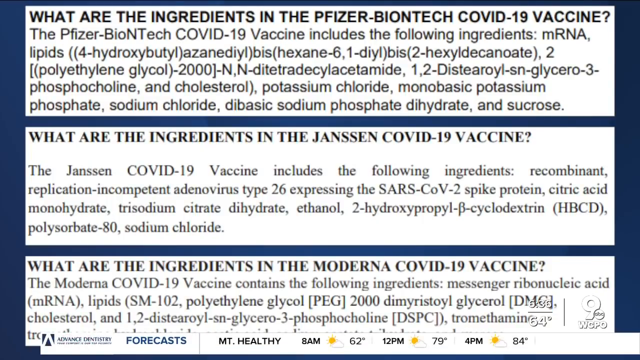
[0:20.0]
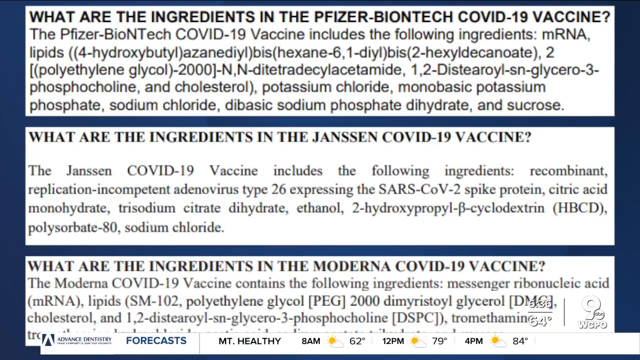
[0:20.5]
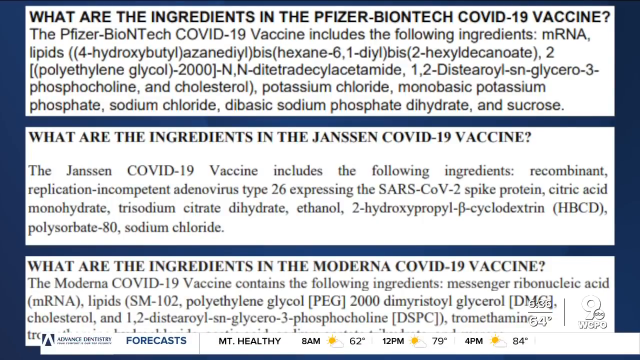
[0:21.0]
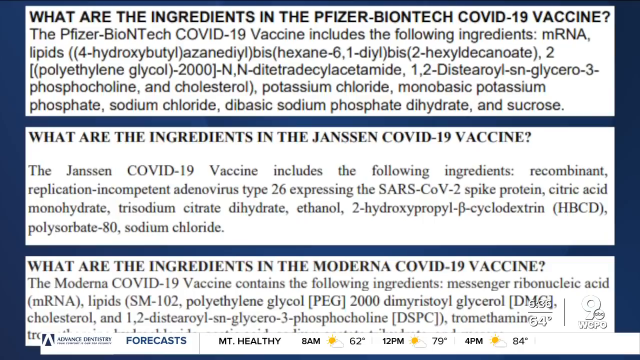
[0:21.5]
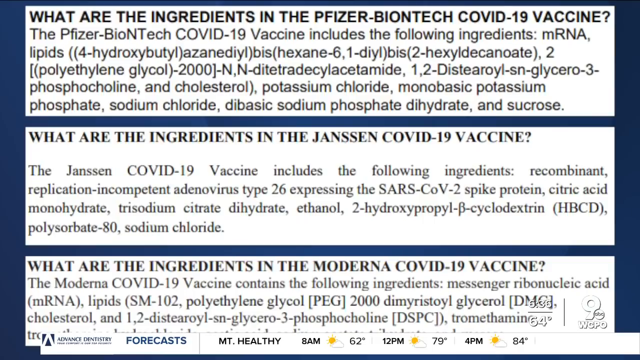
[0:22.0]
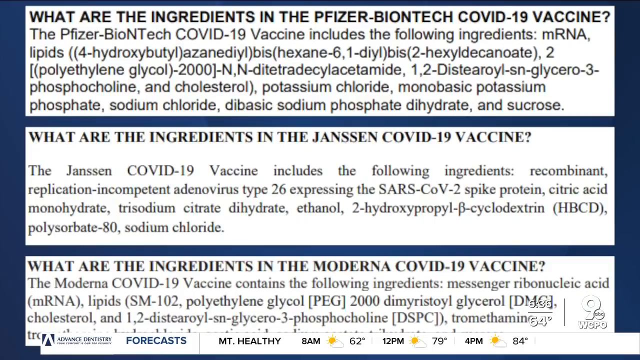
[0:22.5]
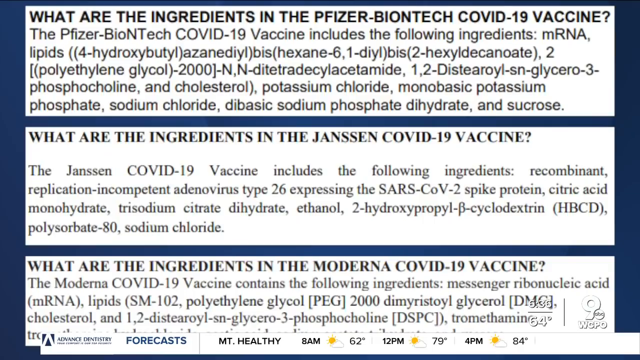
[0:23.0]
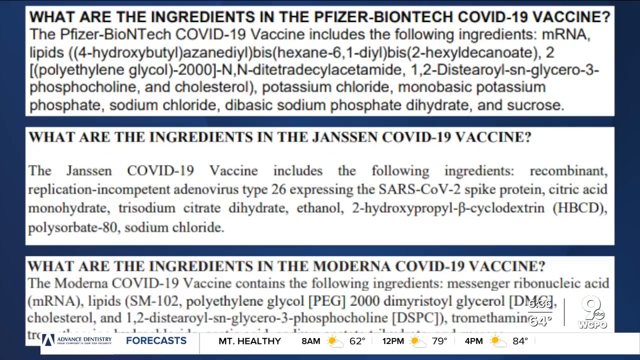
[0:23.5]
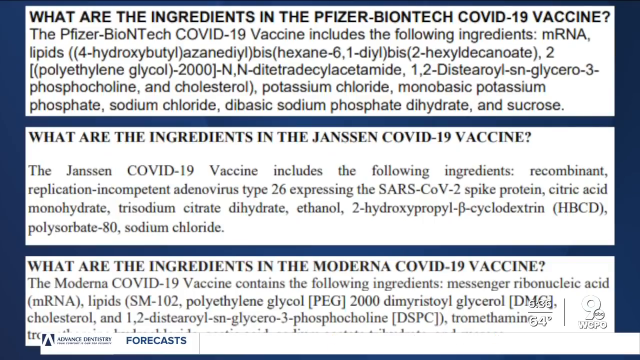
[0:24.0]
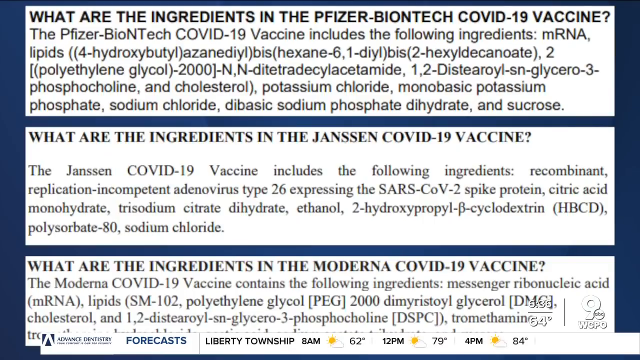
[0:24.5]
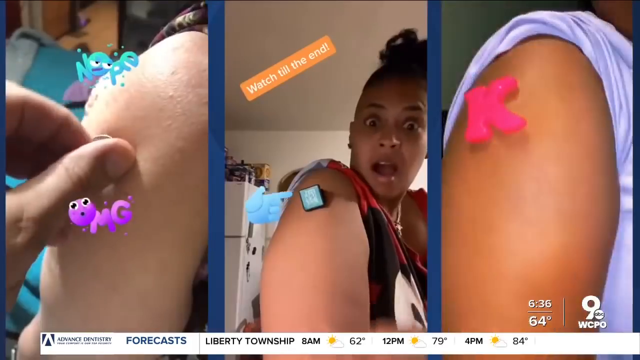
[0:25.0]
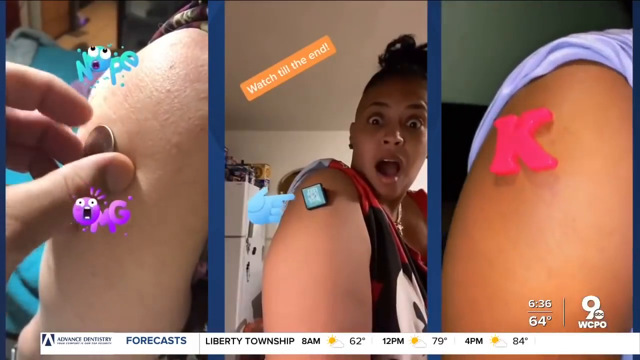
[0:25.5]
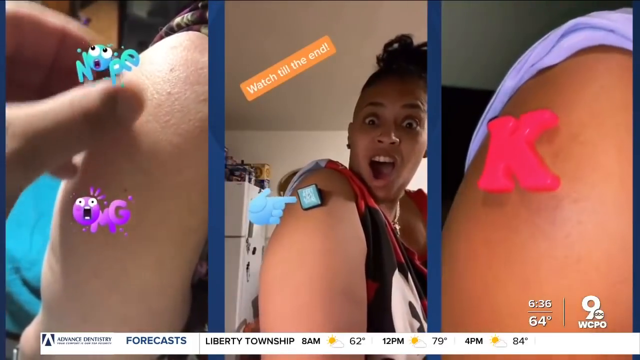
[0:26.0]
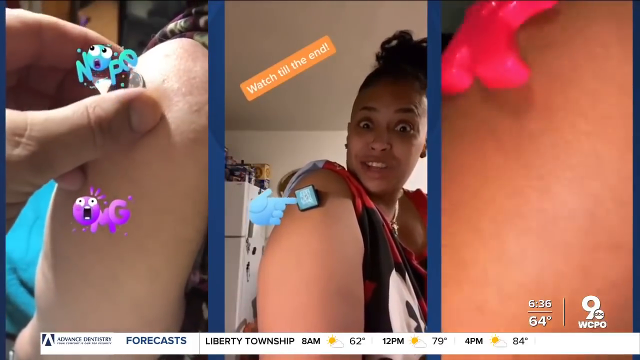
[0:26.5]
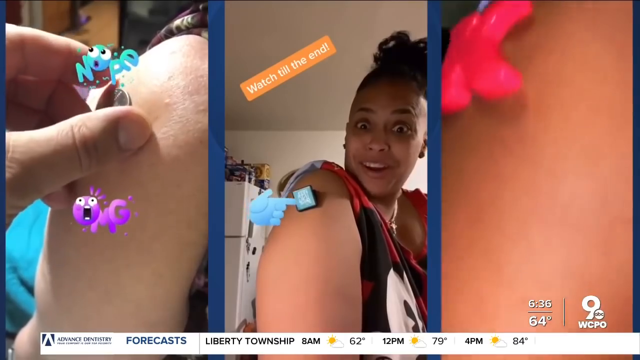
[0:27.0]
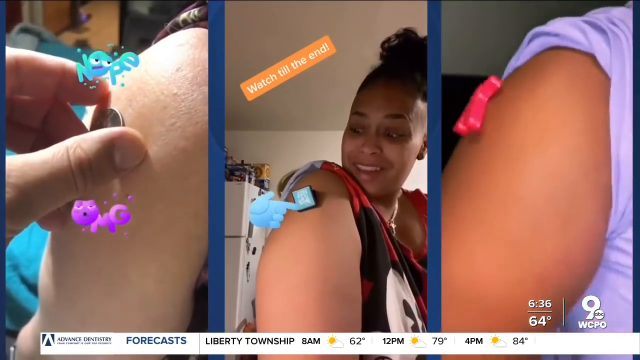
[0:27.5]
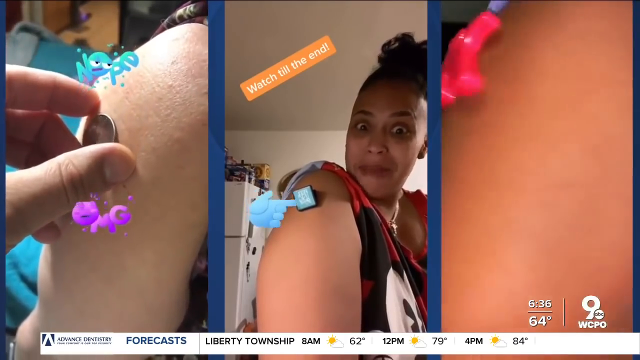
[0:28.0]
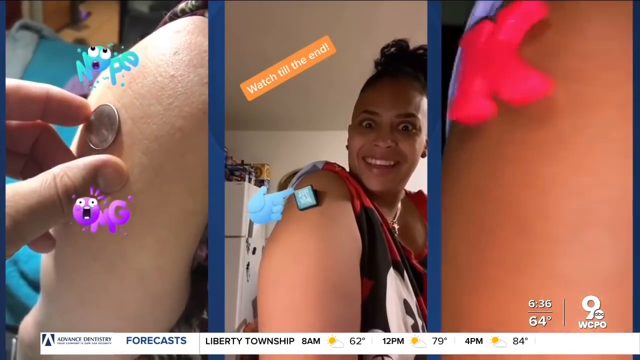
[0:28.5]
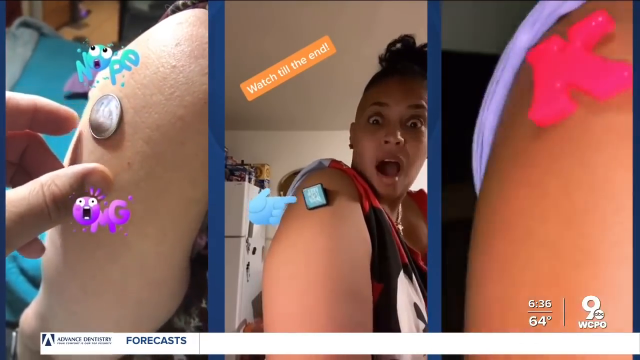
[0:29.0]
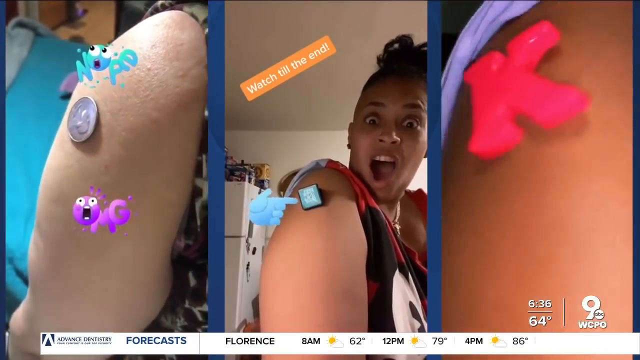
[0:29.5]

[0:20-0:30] An image shows the ingredients in the Janssen COVID-19 vaccine, followed by the Moderna vaccine, with all of the vaccine's listed ingredients shown below. Next, a woman appears to put a quarter on her arm, and it stays there; she then puts a refrigerator magnet on her arm, and it also stays, with a tag reading "watch till the end." The video then returns to the ingredients for the COVID-19 vaccine.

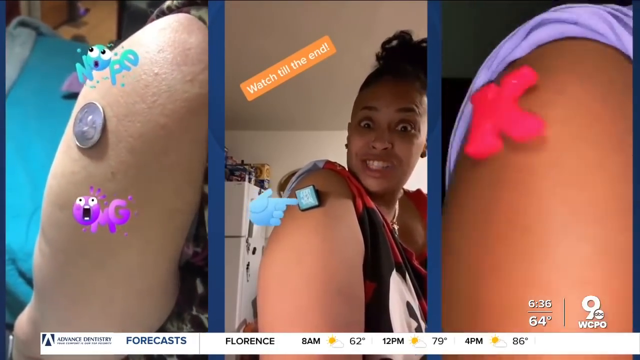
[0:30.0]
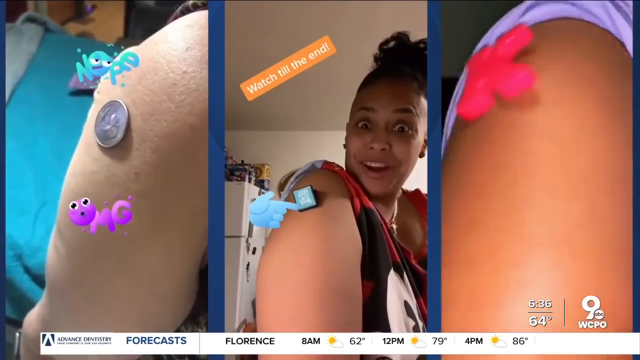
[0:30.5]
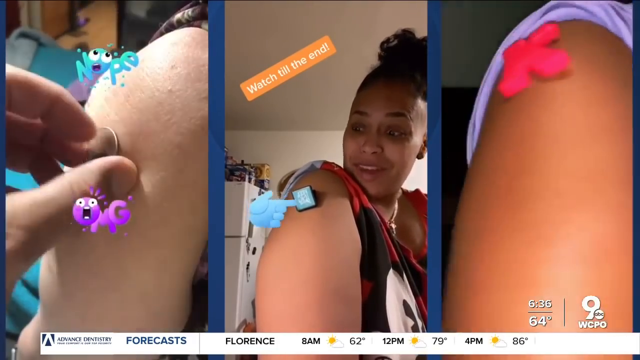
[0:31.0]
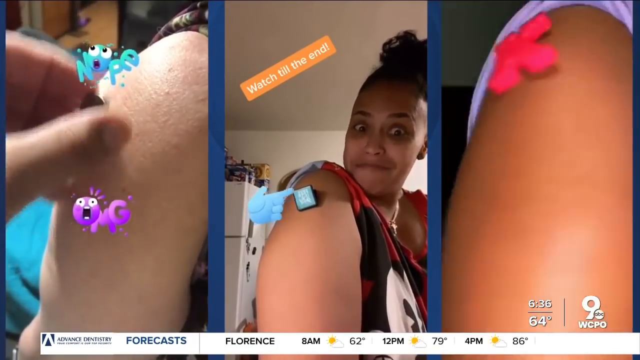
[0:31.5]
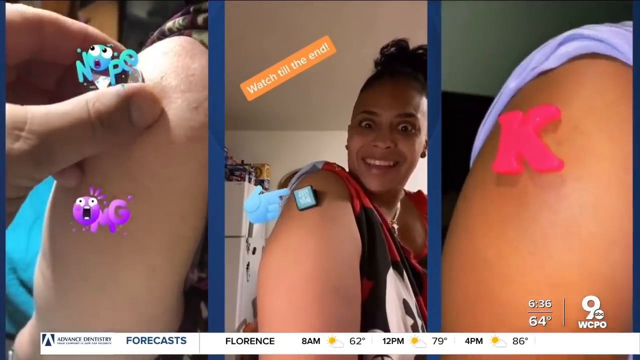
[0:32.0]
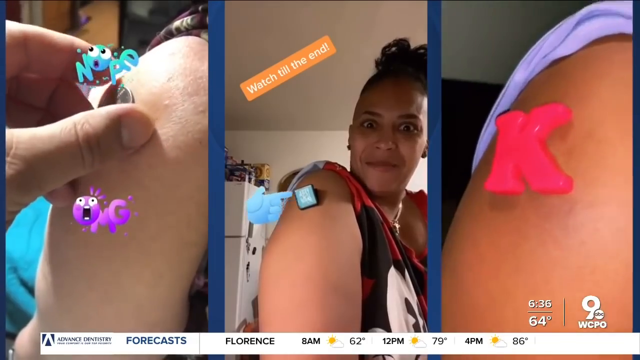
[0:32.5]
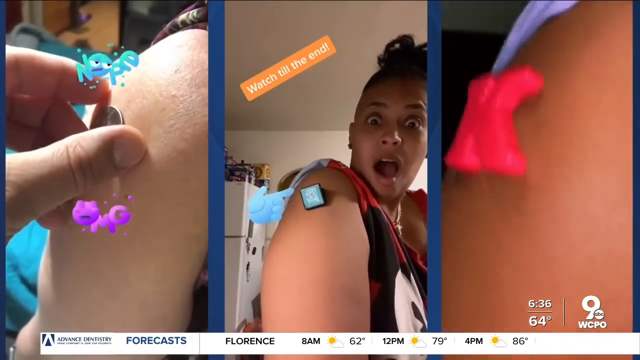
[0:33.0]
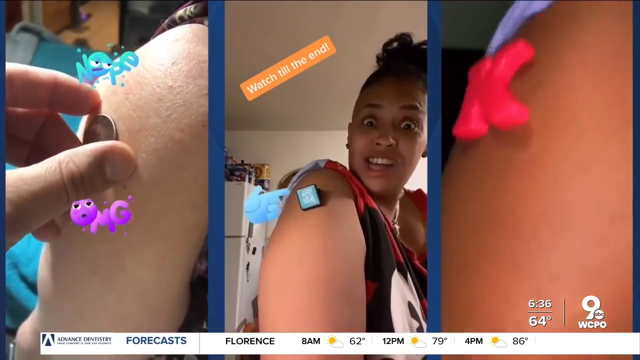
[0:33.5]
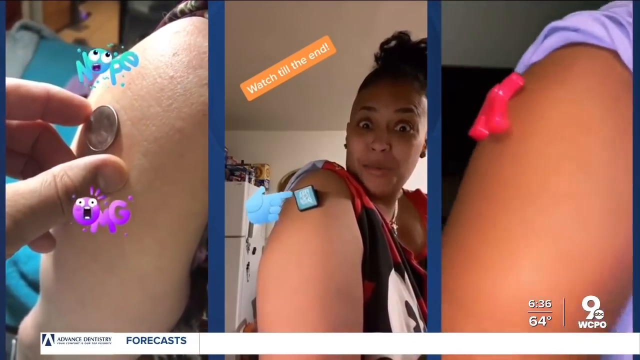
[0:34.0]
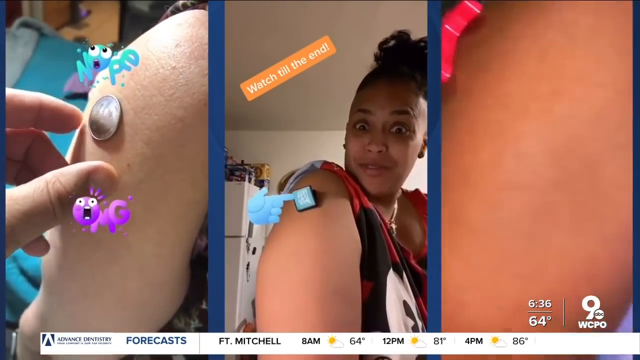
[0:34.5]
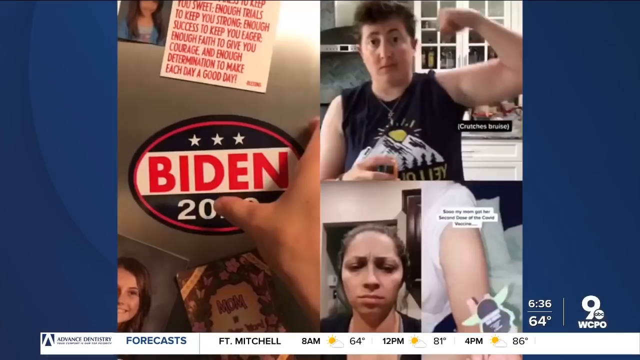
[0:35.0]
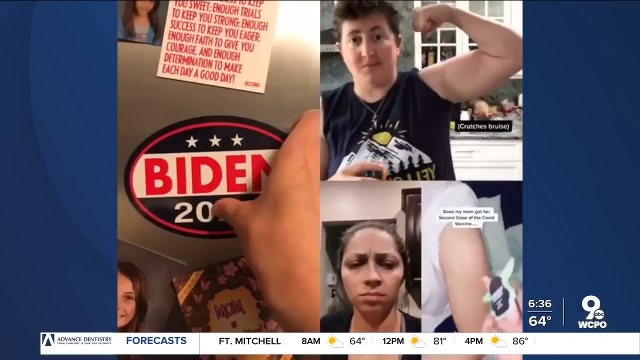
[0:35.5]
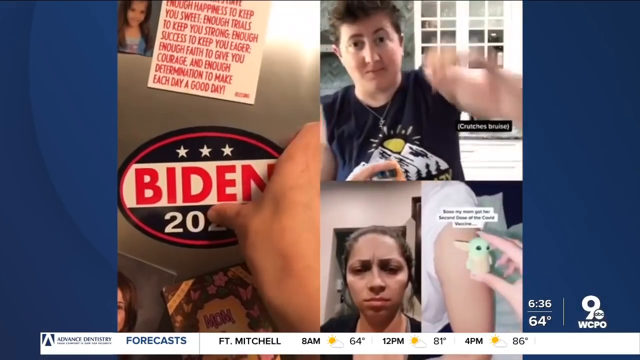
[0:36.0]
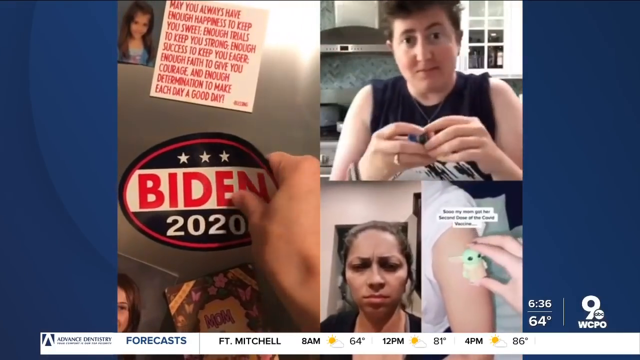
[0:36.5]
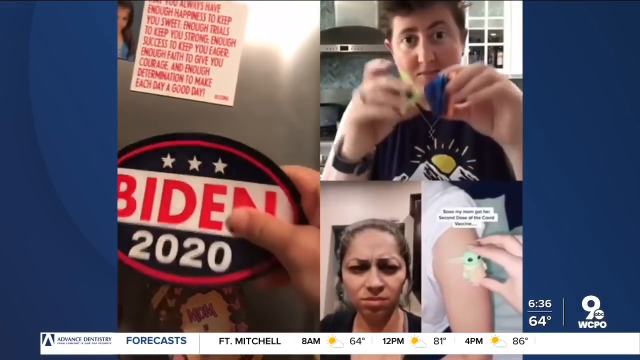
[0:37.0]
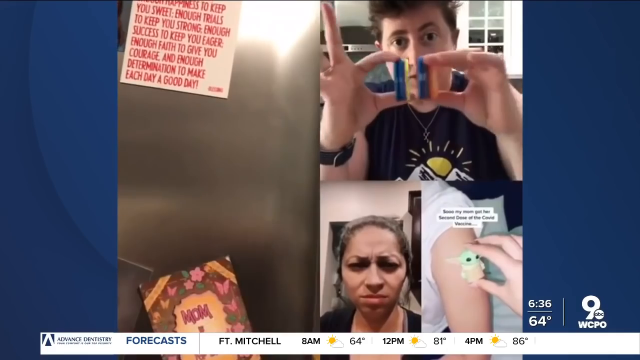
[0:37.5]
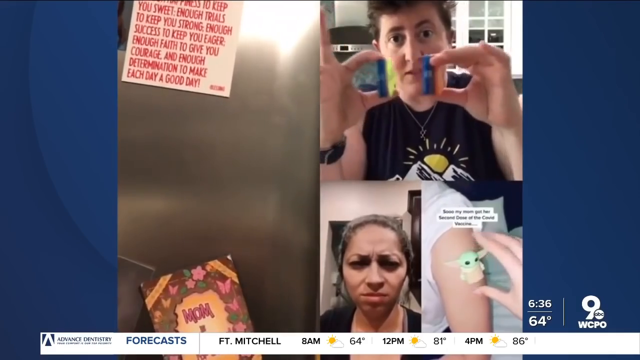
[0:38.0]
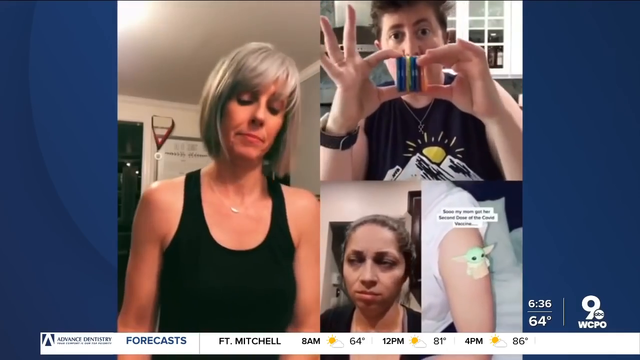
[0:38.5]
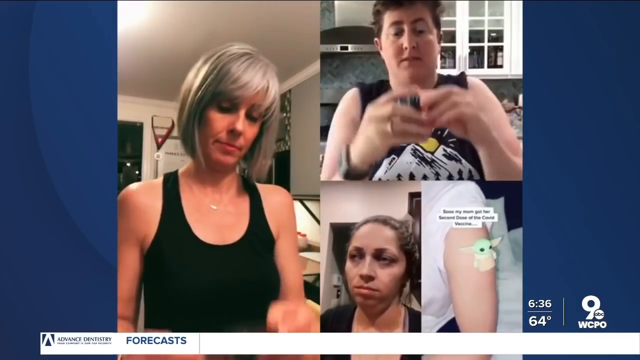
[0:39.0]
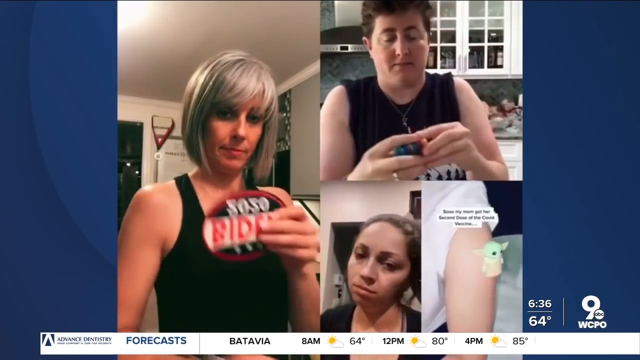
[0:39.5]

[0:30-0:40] A triple split screen shows an African-American woman demonstrating that a quarter and a refrigerator magnet stick to her arm. The broadcast is from ABC9. In one video, a woman with a refrigerator in the background sticks things to her arm, and they stay even when she slides them down. Another image shows other people with a Biden 2020 magnet, a Yoda magnet and another kind of magnet, demonstrating that anything they put up to the spot on their arm where they received the vaccination sticks.